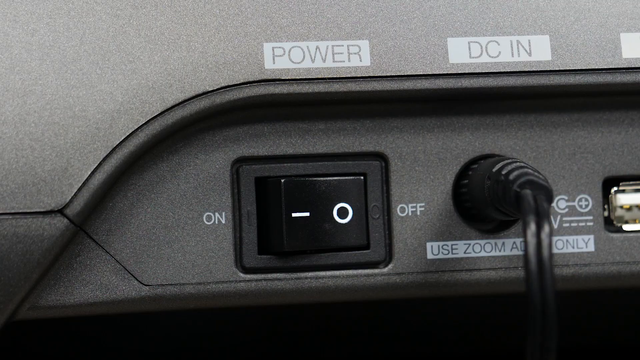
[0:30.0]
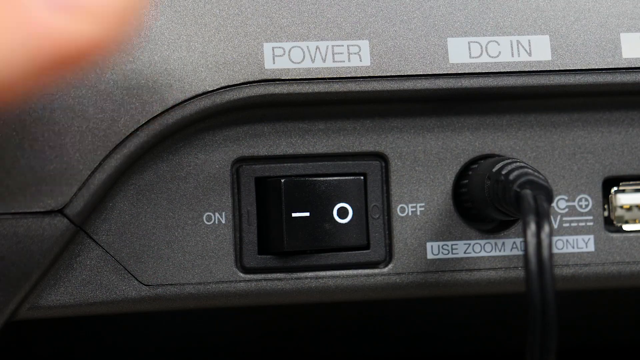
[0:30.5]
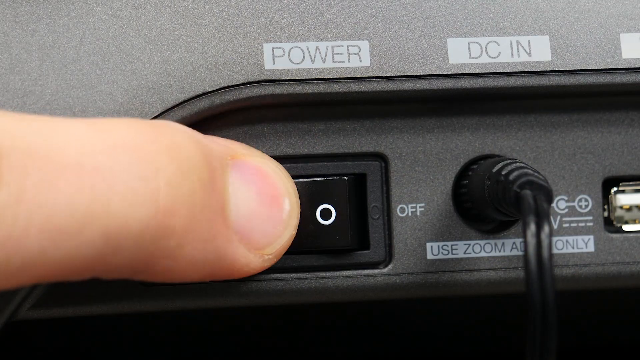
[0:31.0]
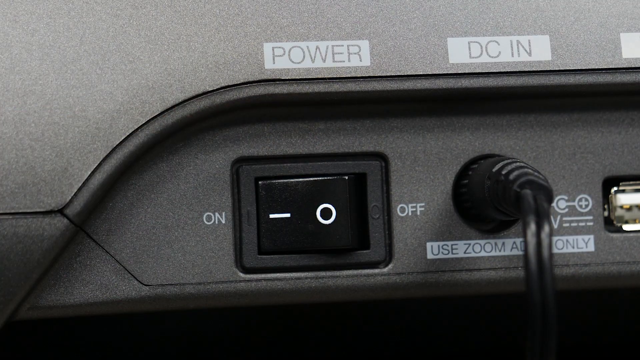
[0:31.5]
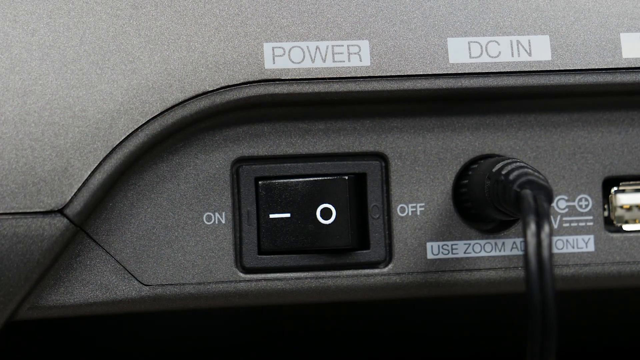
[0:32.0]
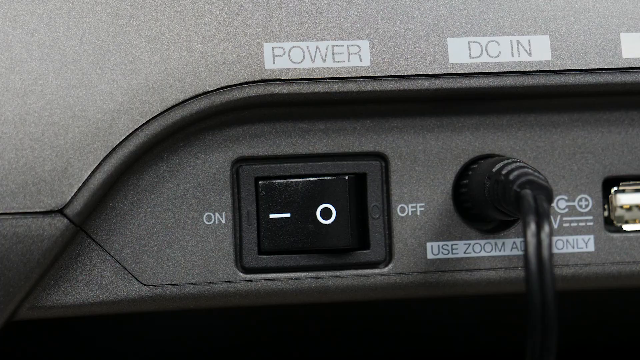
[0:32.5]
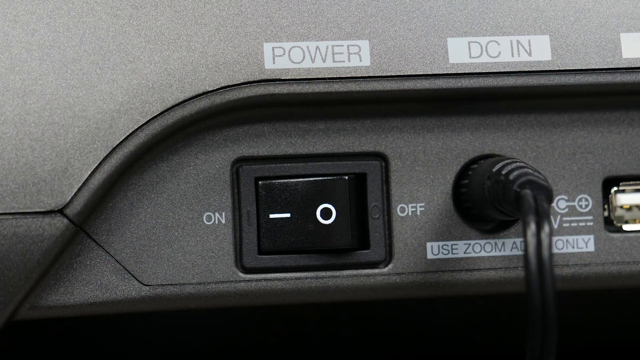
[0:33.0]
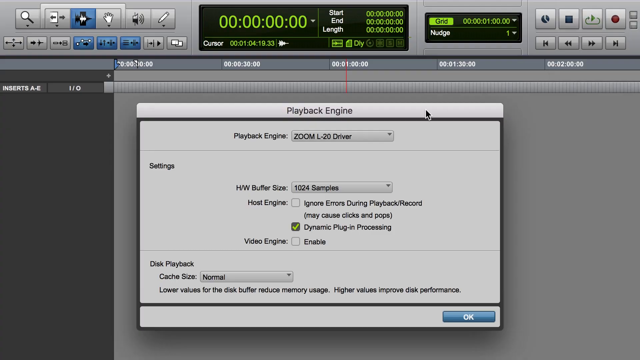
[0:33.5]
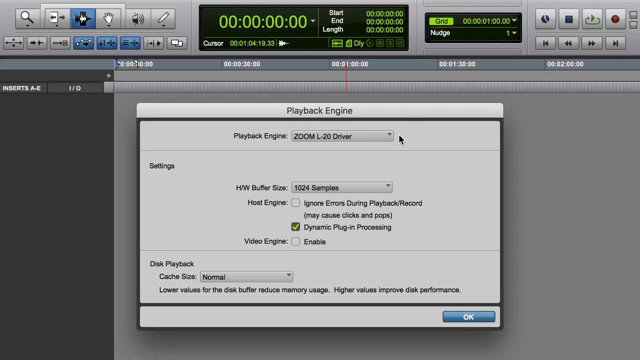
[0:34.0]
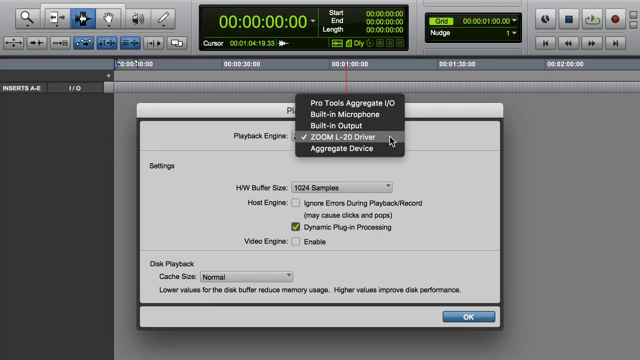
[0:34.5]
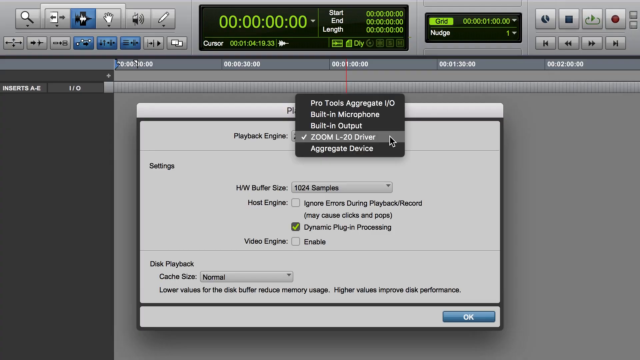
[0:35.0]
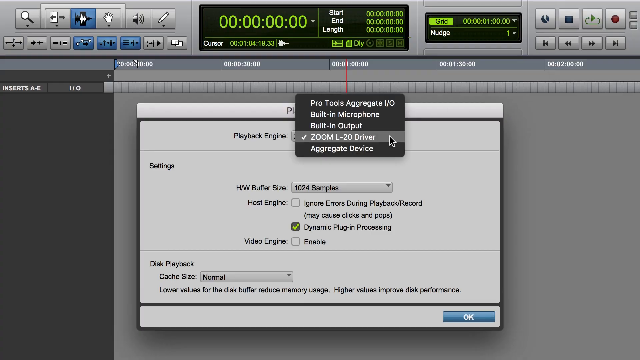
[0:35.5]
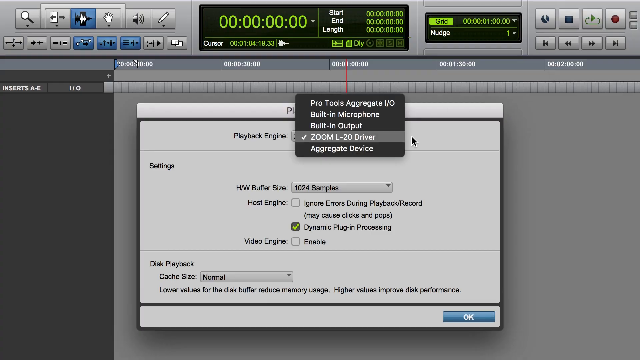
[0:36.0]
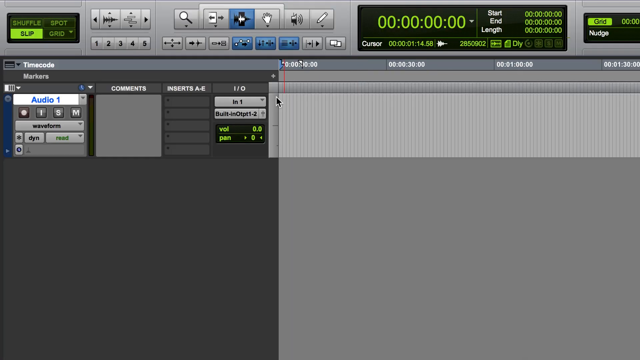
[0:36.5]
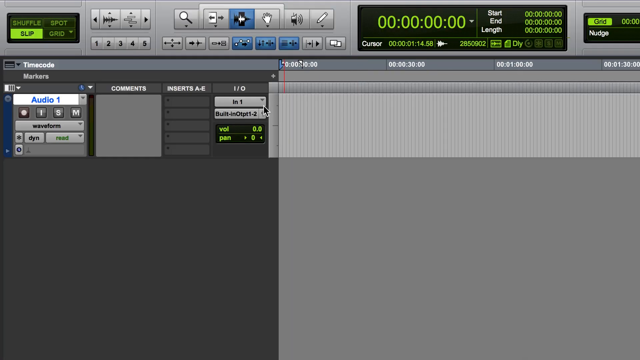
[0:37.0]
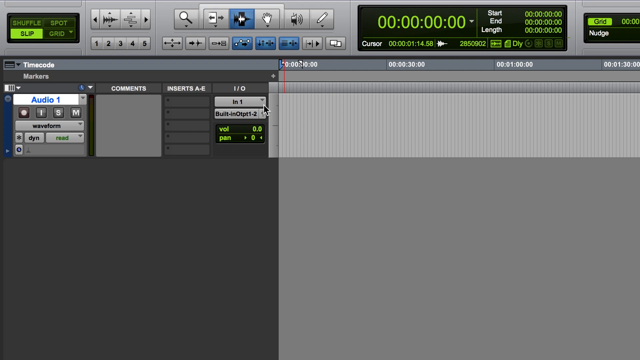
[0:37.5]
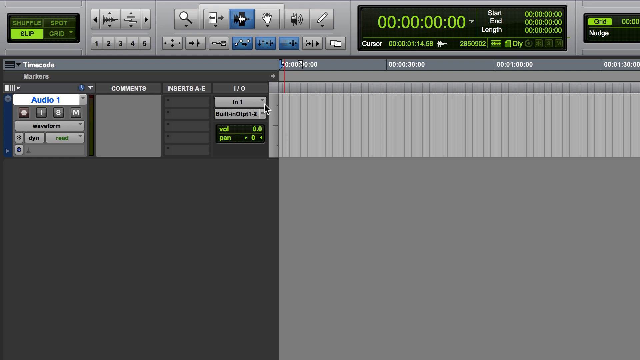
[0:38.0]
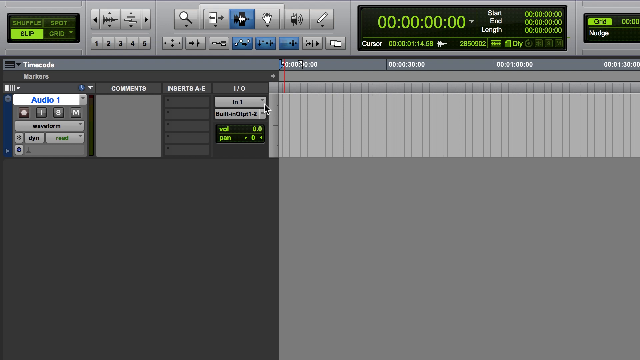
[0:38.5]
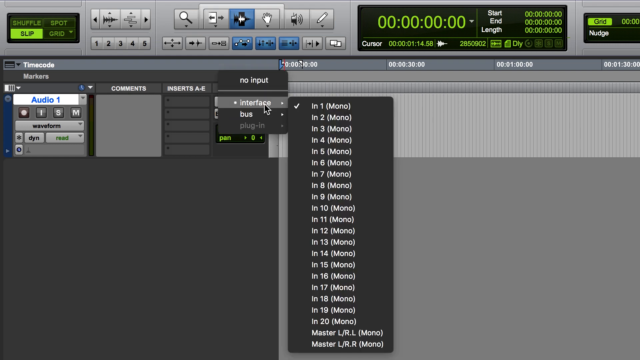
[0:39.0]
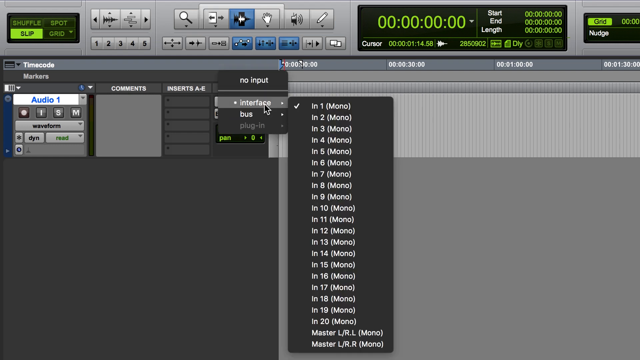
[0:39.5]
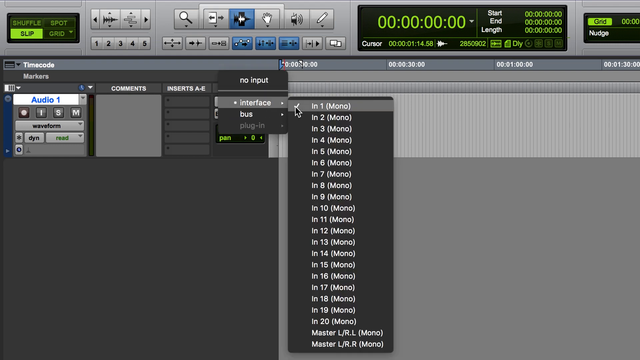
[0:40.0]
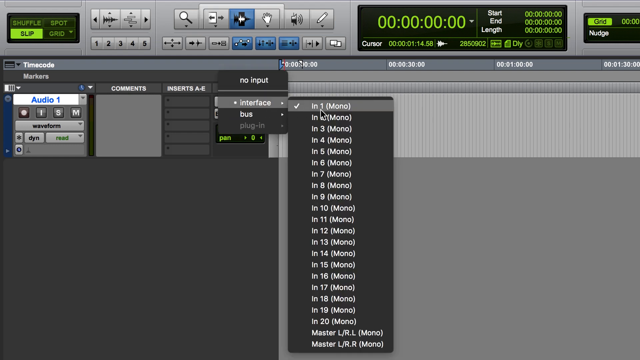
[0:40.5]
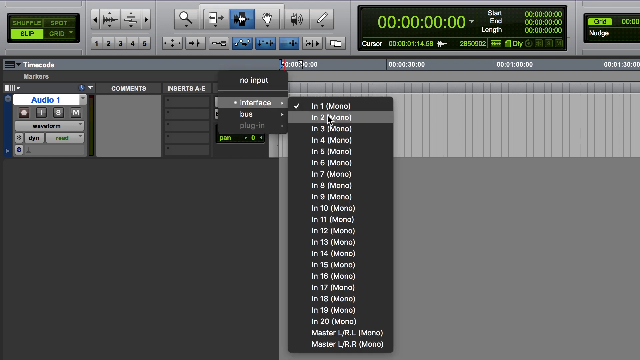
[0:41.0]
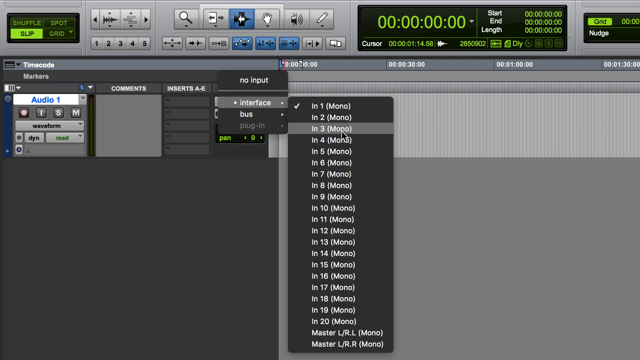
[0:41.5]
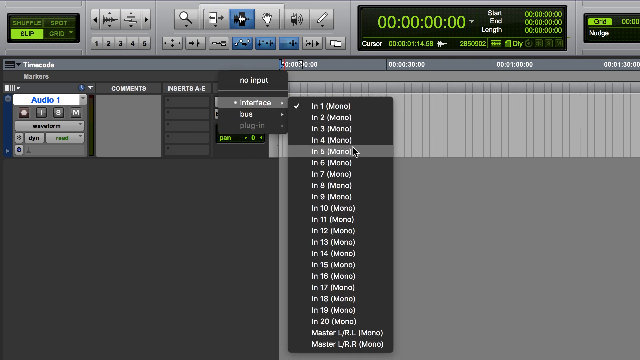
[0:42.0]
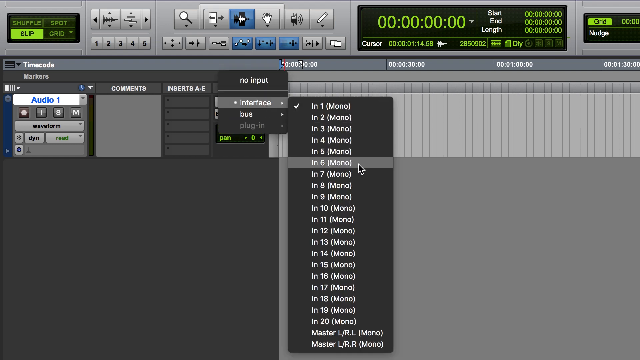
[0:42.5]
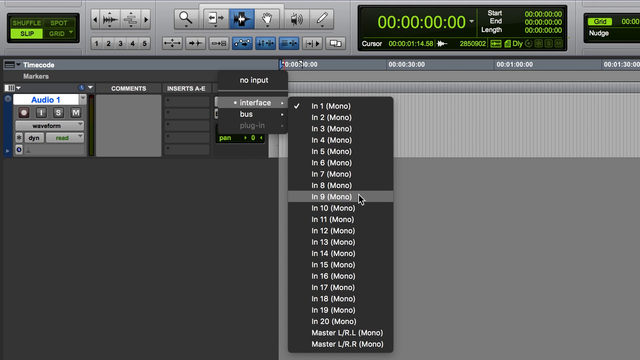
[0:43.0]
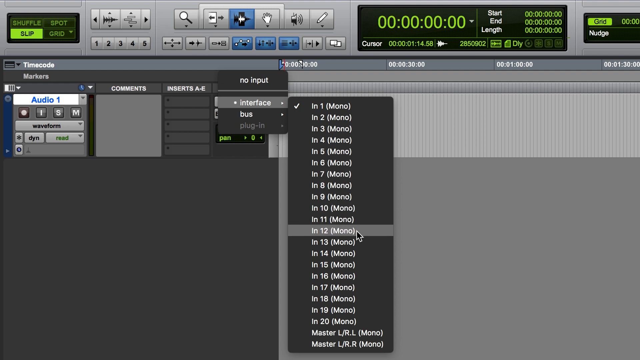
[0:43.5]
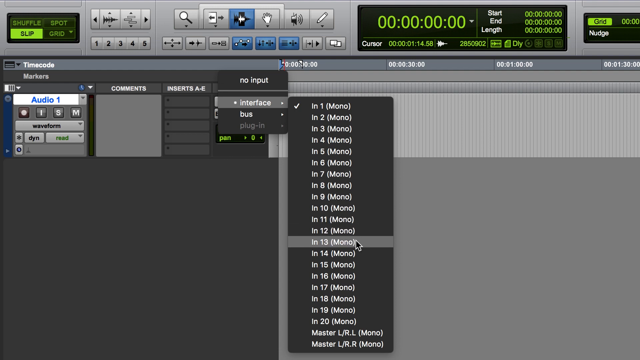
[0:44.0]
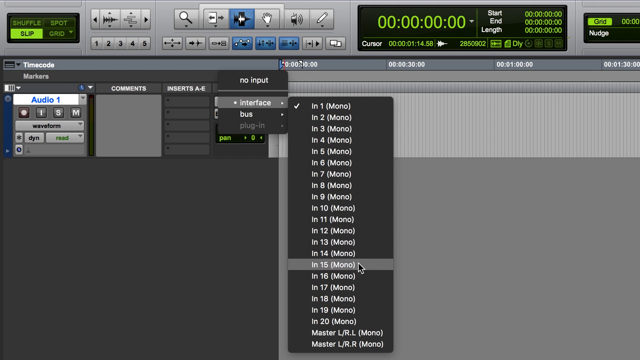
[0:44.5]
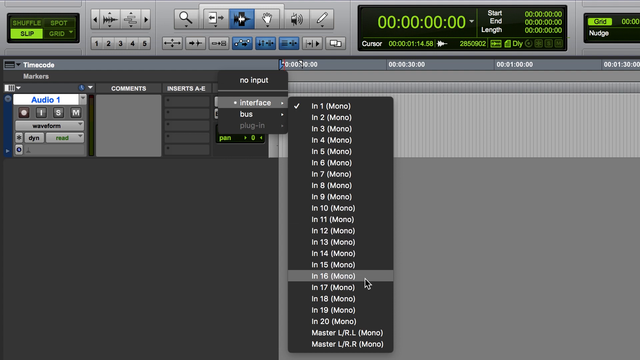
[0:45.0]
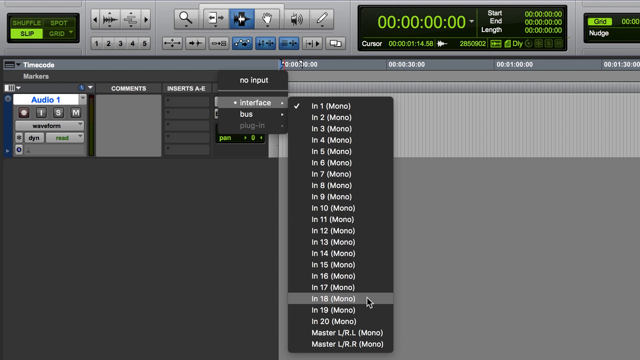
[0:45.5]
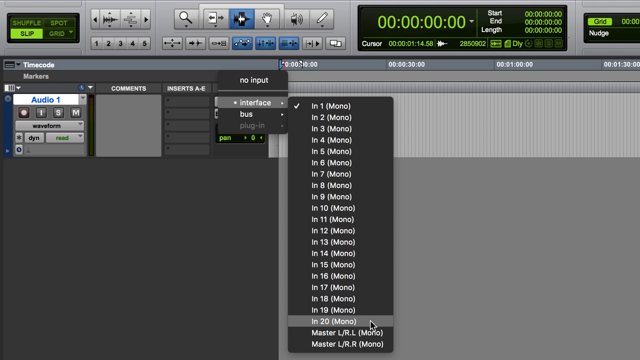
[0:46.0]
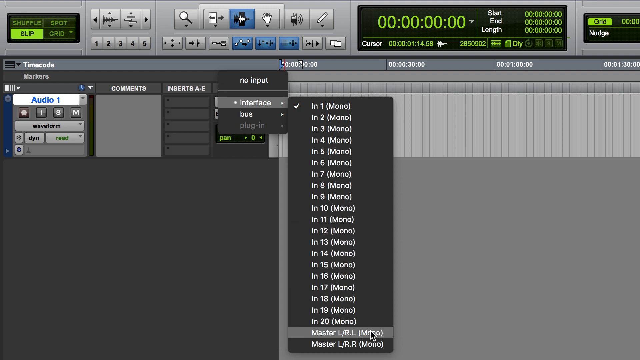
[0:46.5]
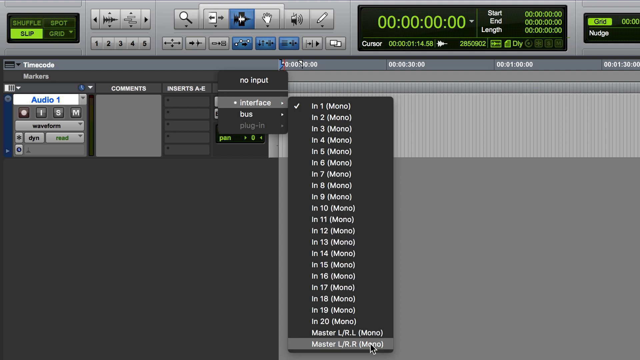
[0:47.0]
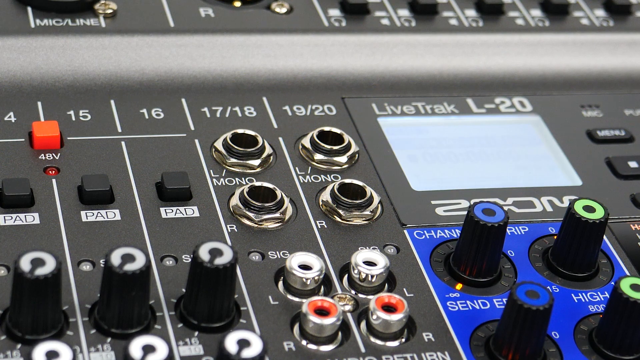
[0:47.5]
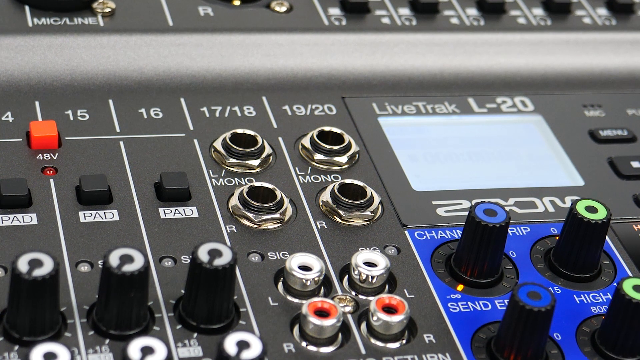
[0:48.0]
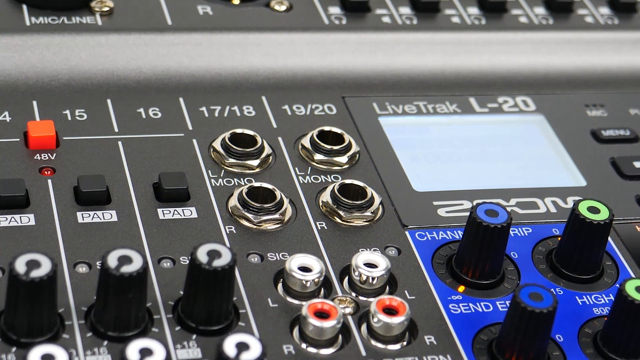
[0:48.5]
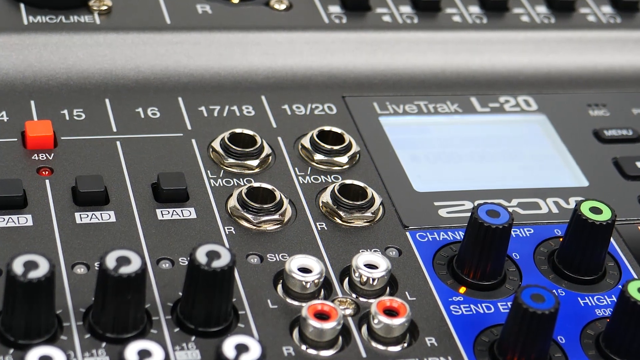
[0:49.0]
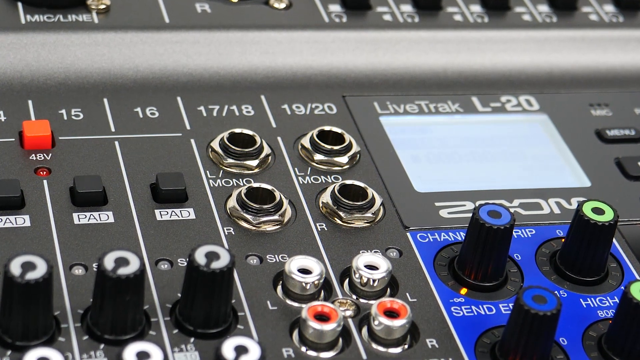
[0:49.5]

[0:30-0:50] The on button is turned on. Zoom is clicked, and it looks like an interface is being picked. The Zoom L20 driver is clicked, and a drop-down list is scrolled through; it contains 22 options. Silver buttons are shown, and the power button is on. No option is picked; the list is just scrolled down to show them all.